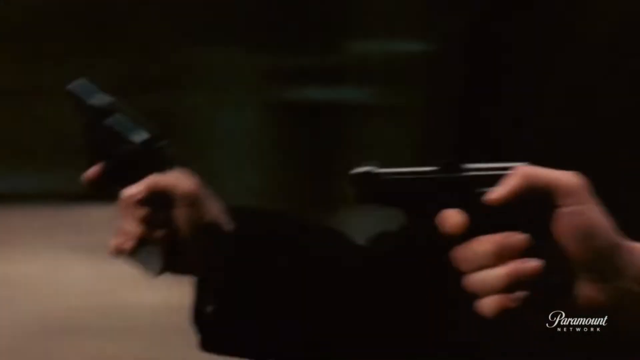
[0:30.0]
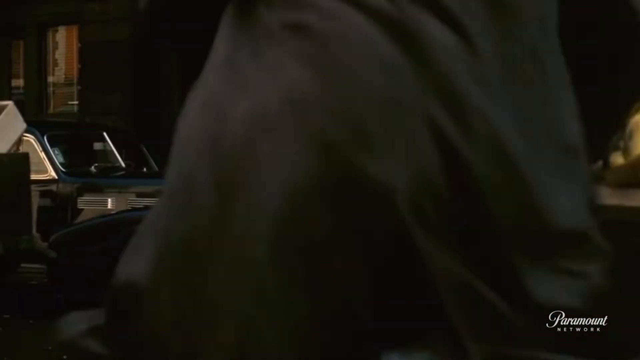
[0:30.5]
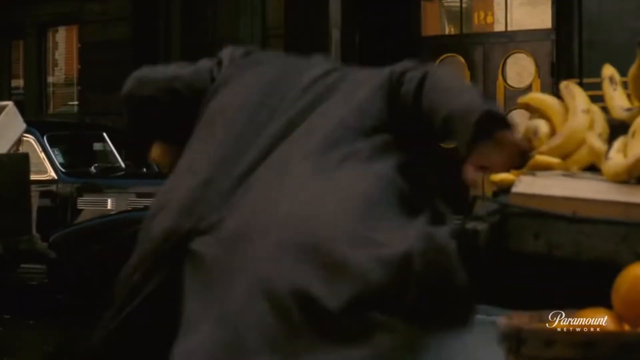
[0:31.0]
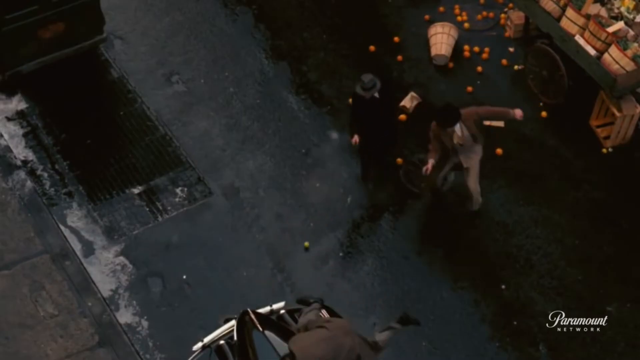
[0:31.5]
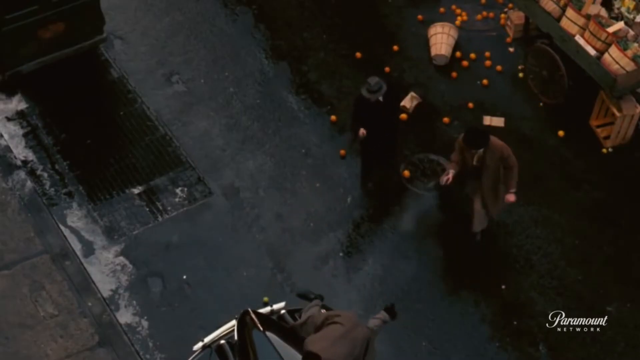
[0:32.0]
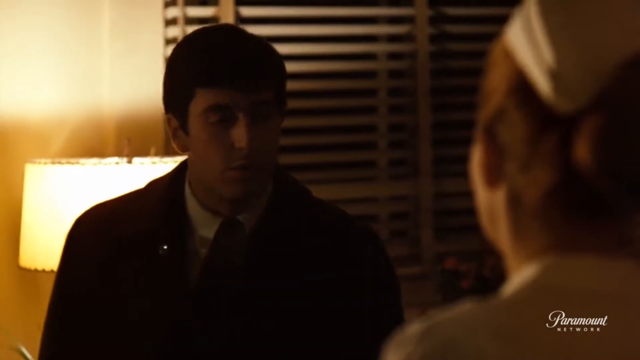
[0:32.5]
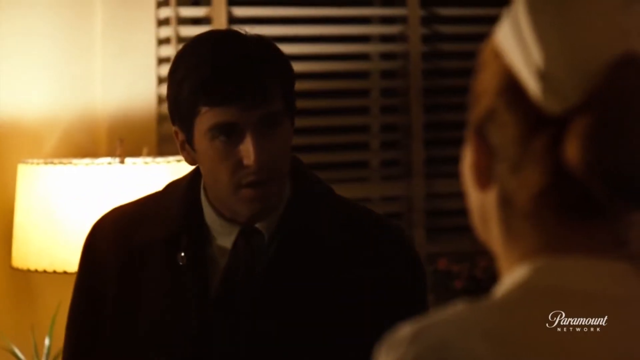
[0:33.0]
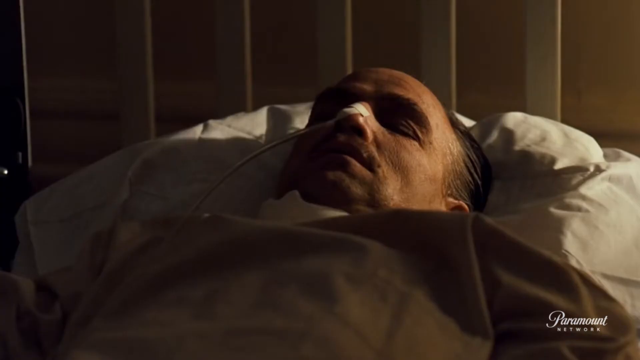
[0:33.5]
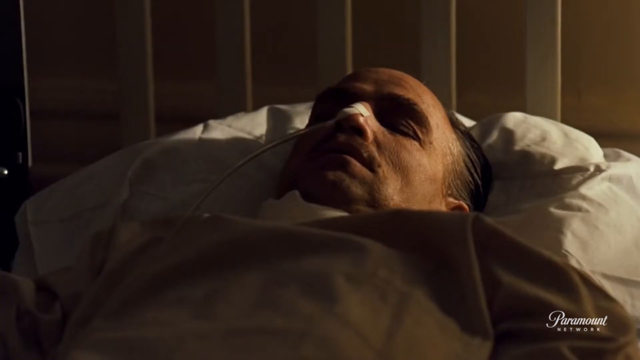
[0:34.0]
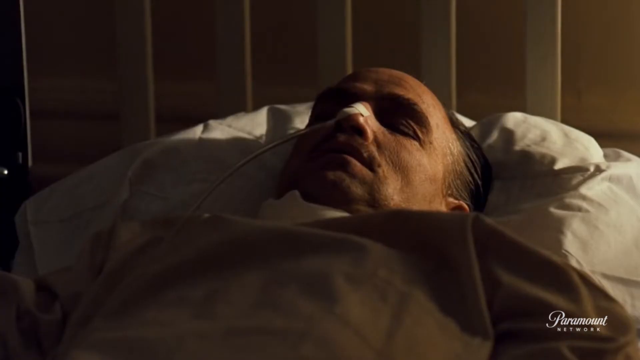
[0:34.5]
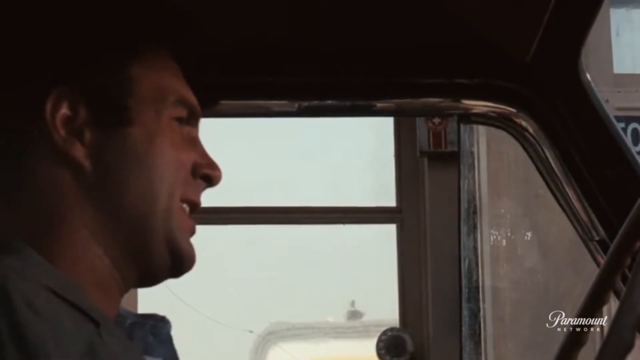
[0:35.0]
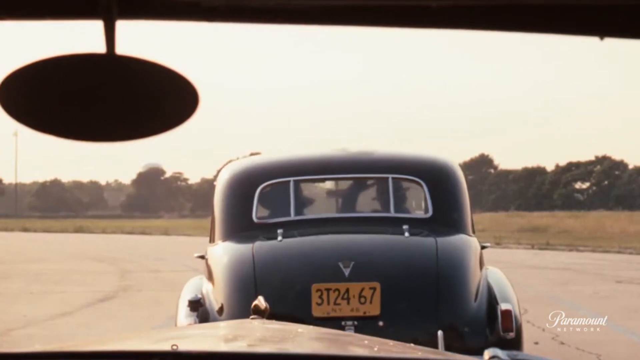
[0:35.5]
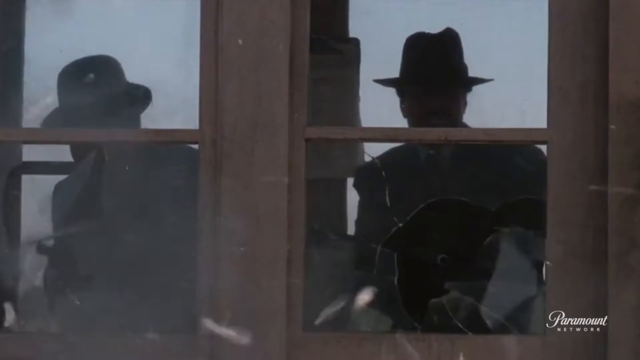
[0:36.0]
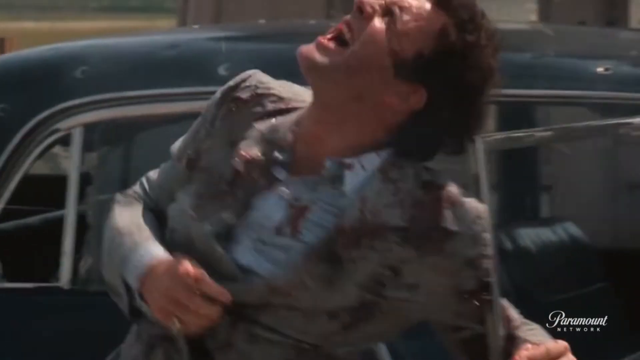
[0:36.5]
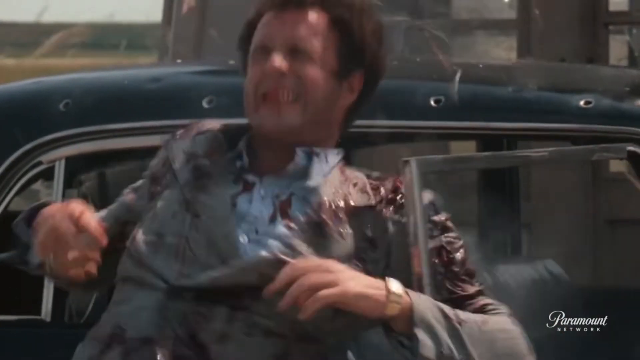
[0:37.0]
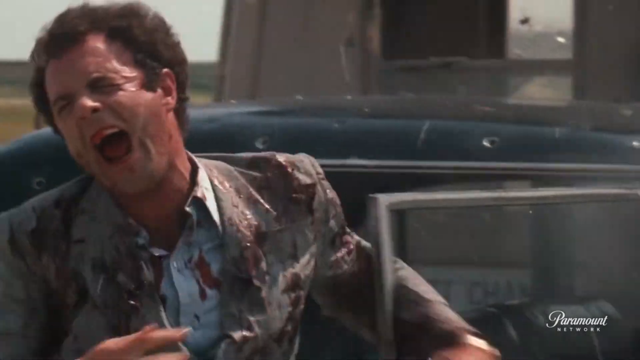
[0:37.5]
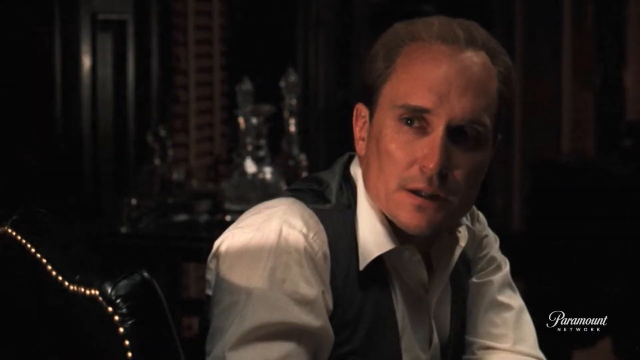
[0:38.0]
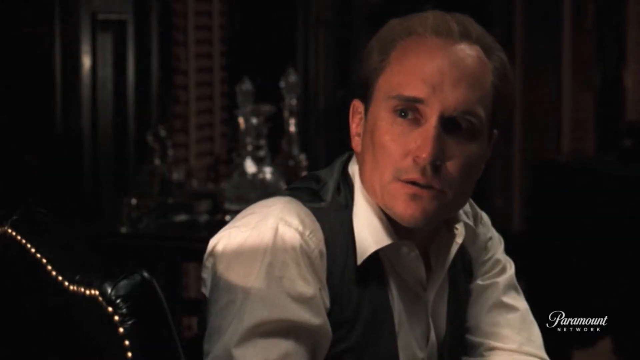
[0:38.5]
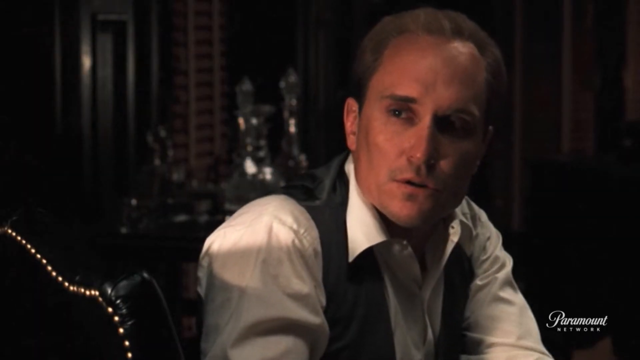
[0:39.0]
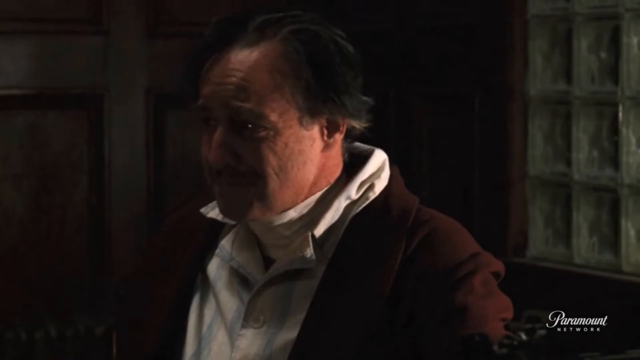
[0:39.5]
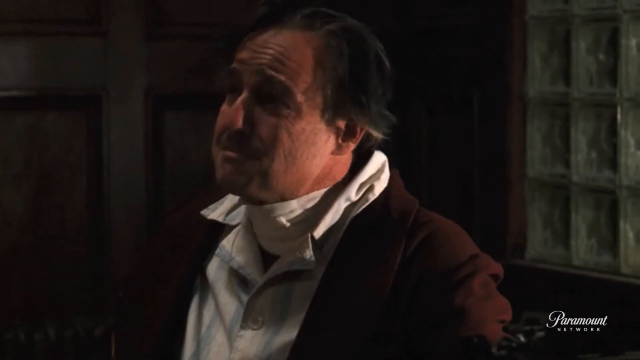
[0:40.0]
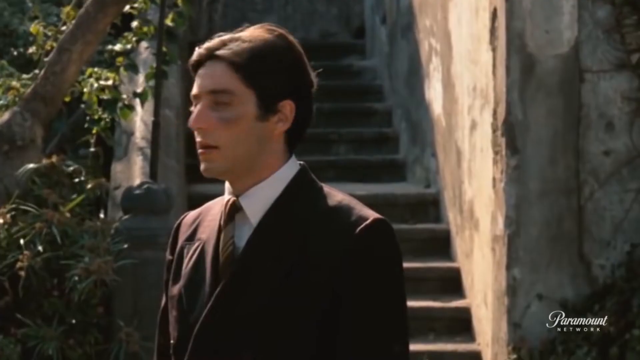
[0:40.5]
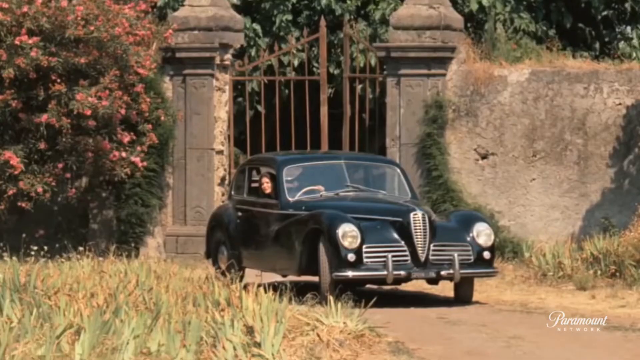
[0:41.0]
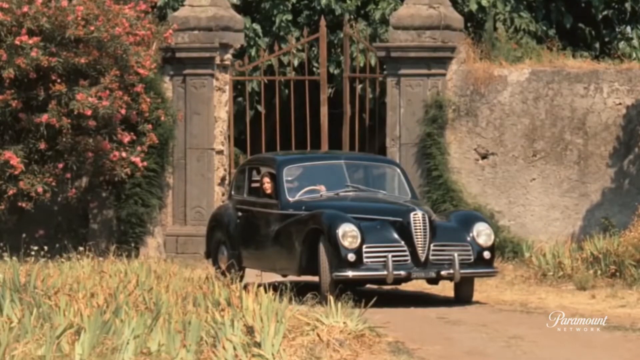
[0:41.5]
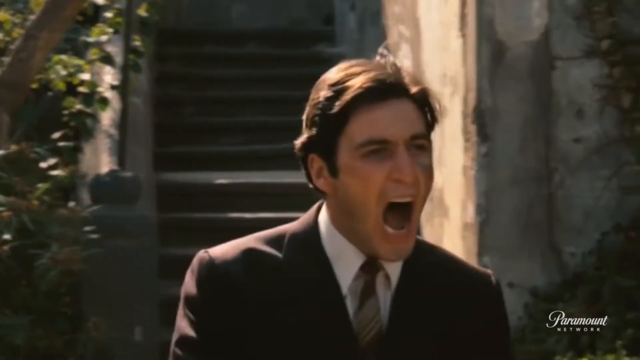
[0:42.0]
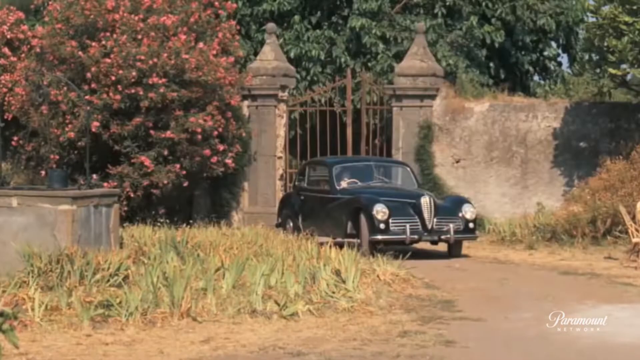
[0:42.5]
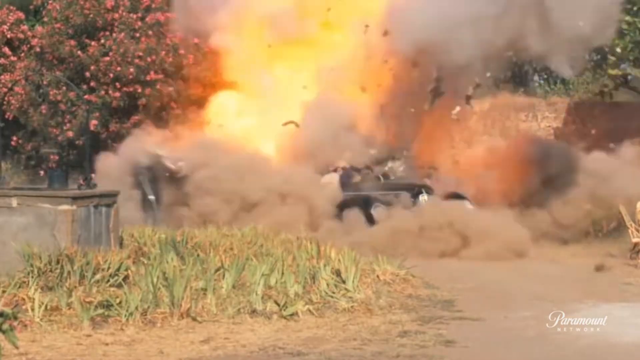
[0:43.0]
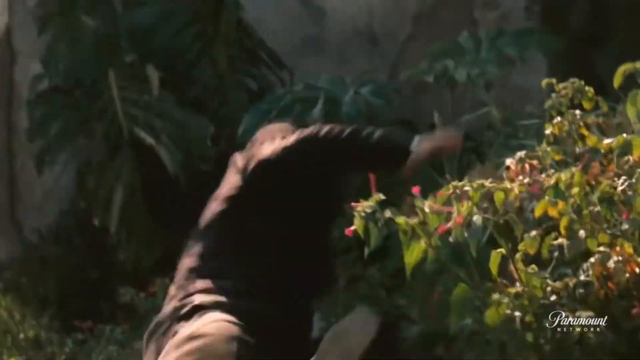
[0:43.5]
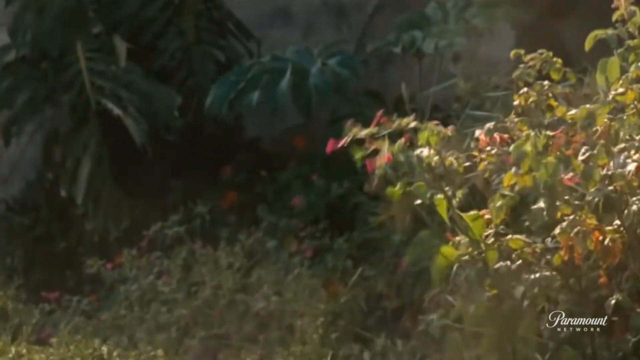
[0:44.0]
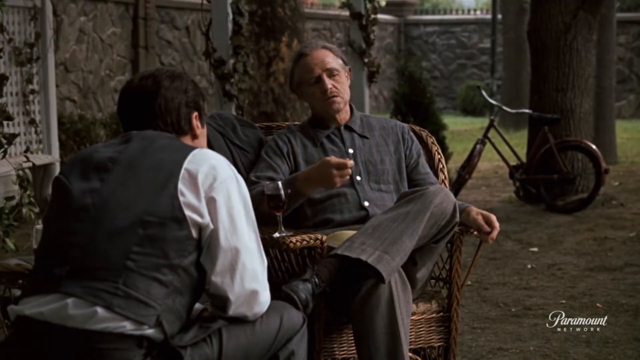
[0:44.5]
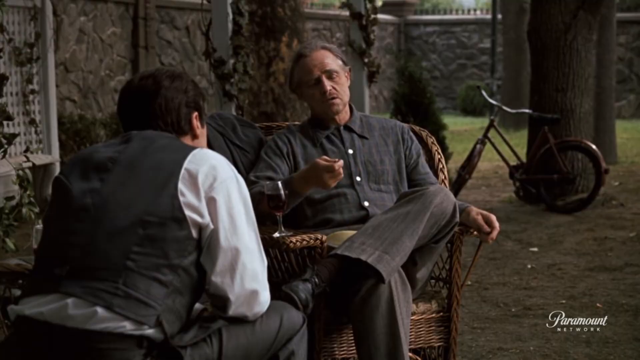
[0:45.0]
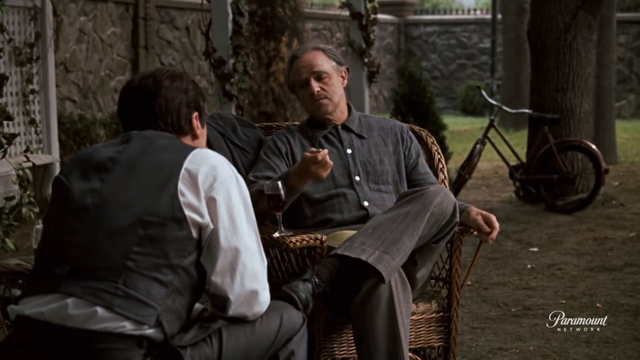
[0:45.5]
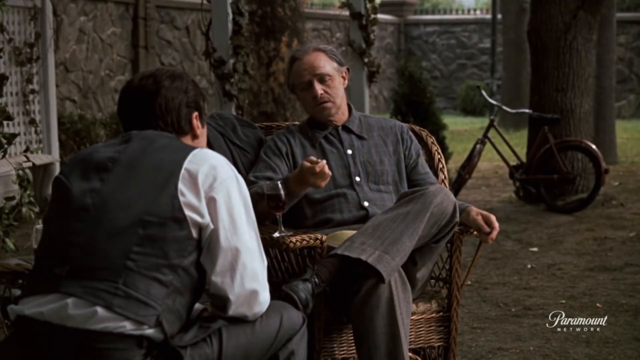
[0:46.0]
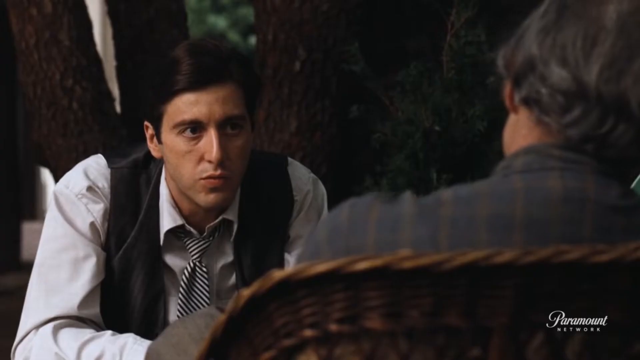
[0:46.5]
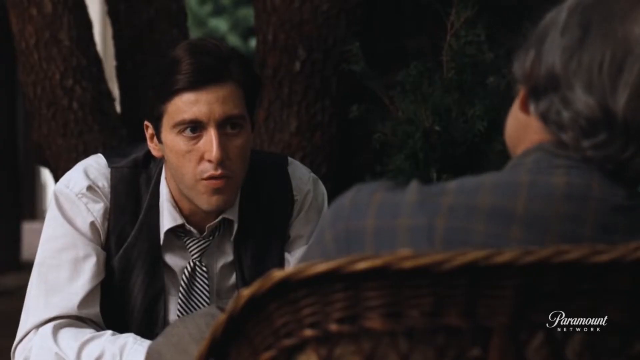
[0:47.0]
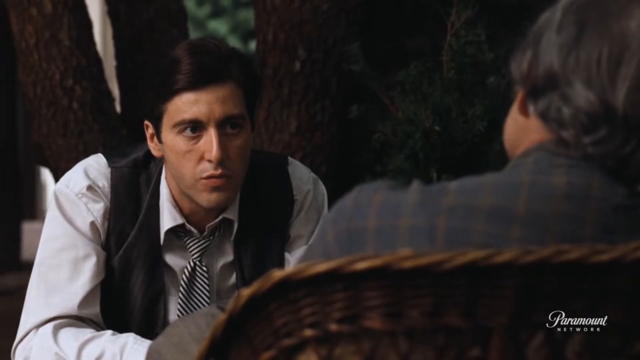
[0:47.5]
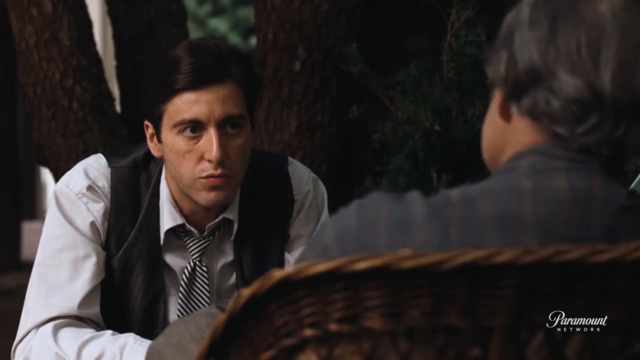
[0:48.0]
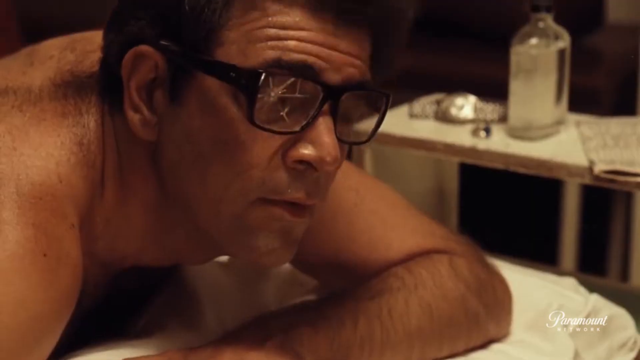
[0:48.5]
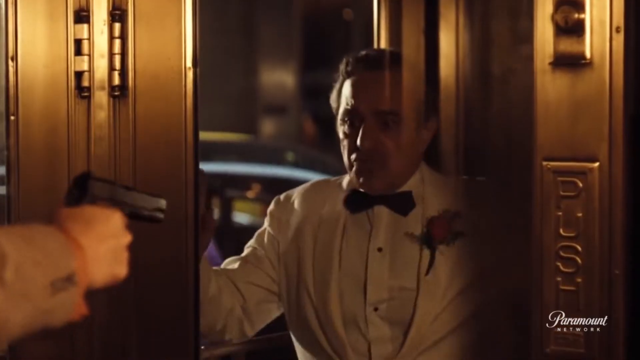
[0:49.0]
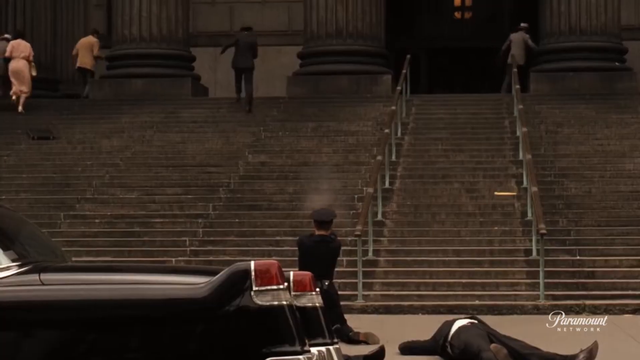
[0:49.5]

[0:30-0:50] In this part of the trailer for Chinatown from Paramount, two men point two black handguns, run, and shoot at a man who jumps in front of a vehicle, scattering fruit. In another scene a man in a house, like a hospital, talks to a nurse while another man lies on a bed, possibly the one who was shot. Two men sit in a vehicle. People shoot at a man coming out of a vehicle; he is shot several times, blood is visible, and the black car is riddled with bullet holes before the man falls down. Two men speak in a house with whiskey bottles and glasses in the background. A lady drives a black vehicle, a man yells, and the vehicle explodes. Two men talk outside, with a bicycle parked beside a tree. A person gets some kind of massage, and another person peeps through the window and shoots.